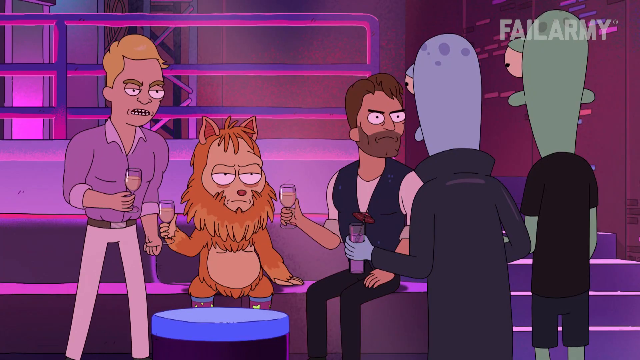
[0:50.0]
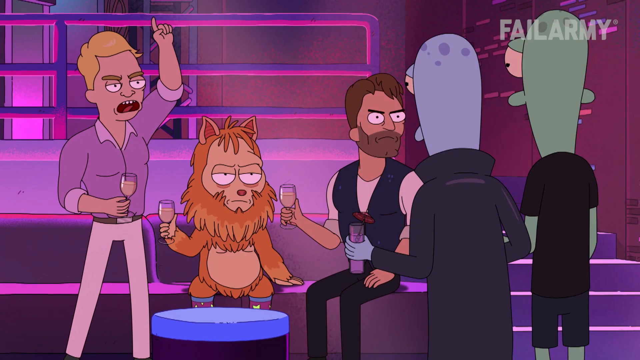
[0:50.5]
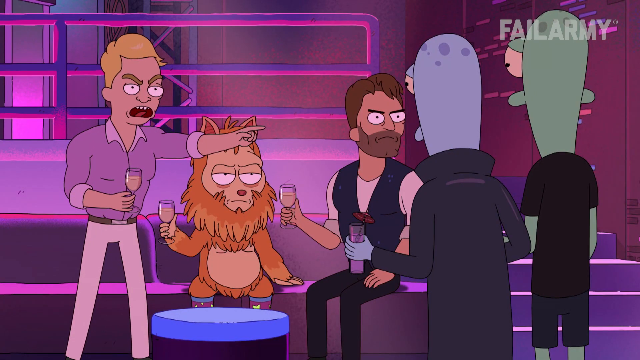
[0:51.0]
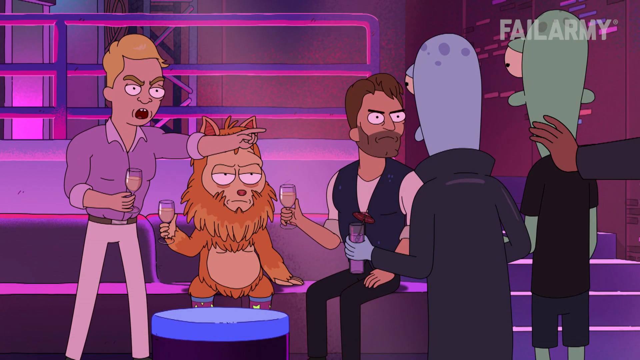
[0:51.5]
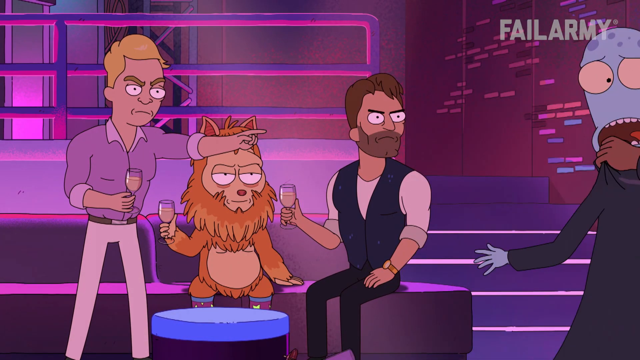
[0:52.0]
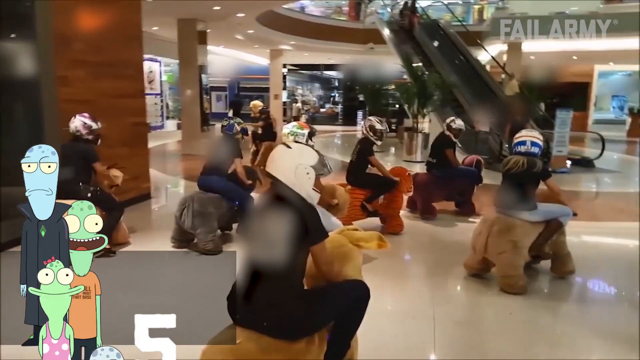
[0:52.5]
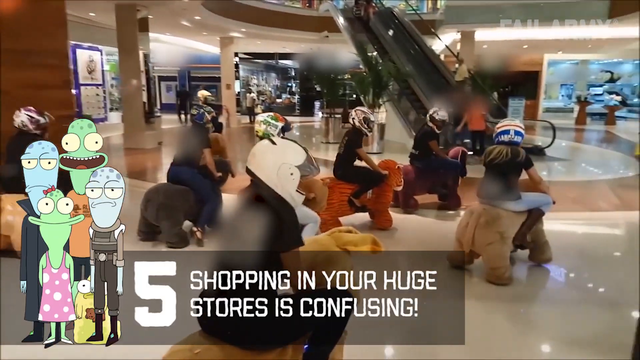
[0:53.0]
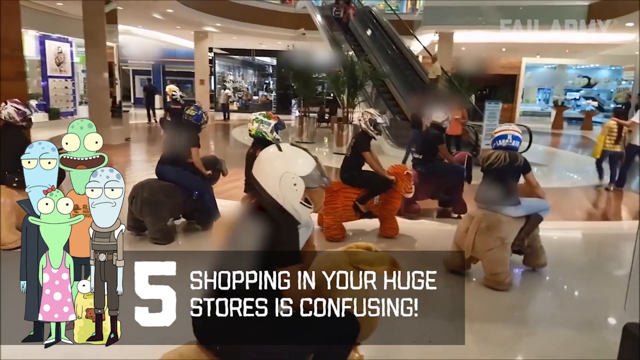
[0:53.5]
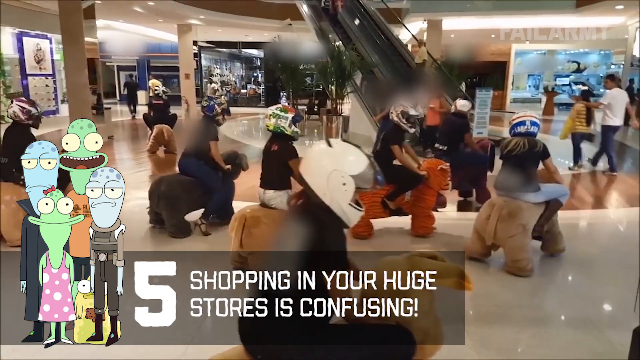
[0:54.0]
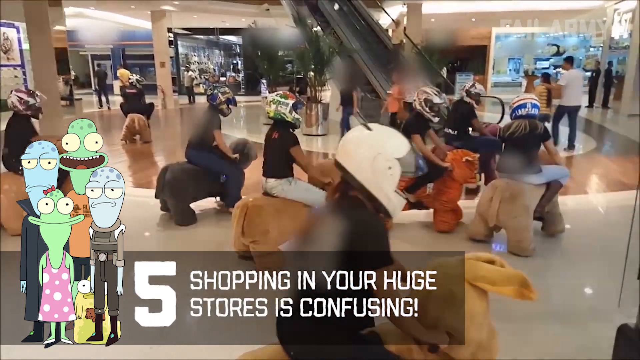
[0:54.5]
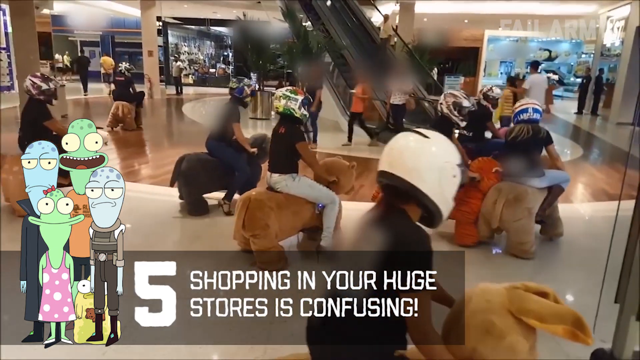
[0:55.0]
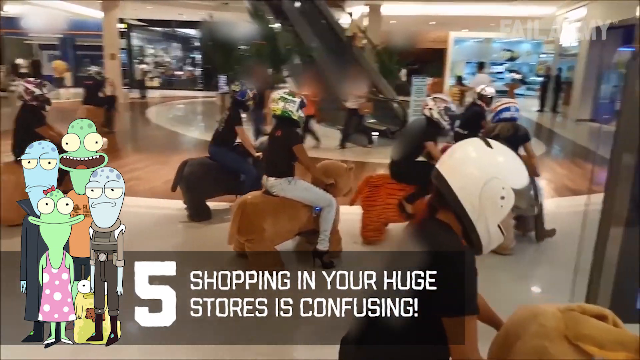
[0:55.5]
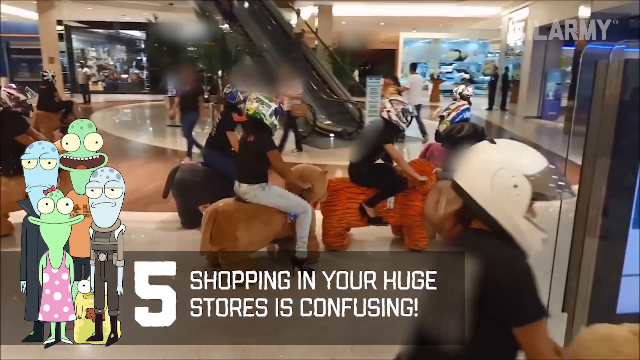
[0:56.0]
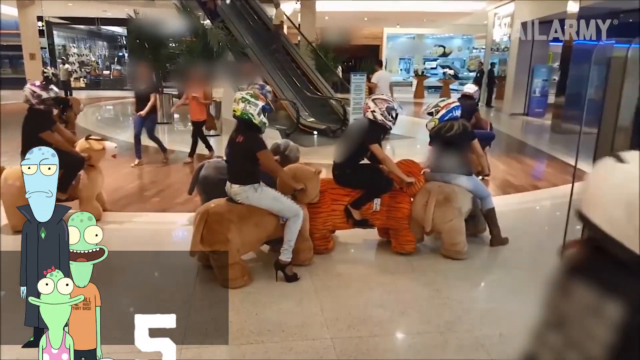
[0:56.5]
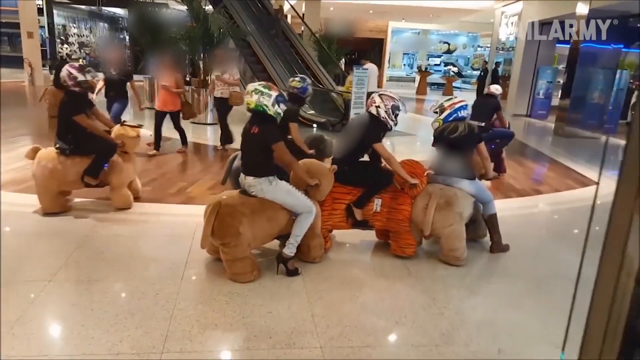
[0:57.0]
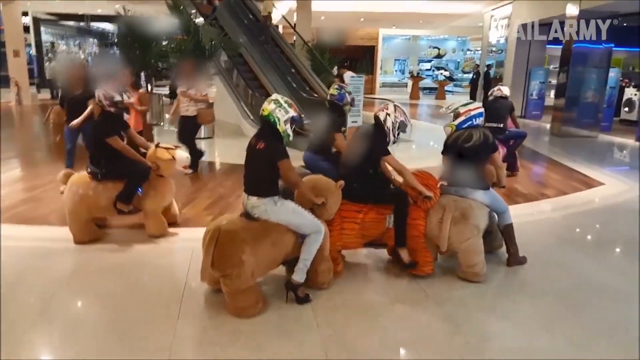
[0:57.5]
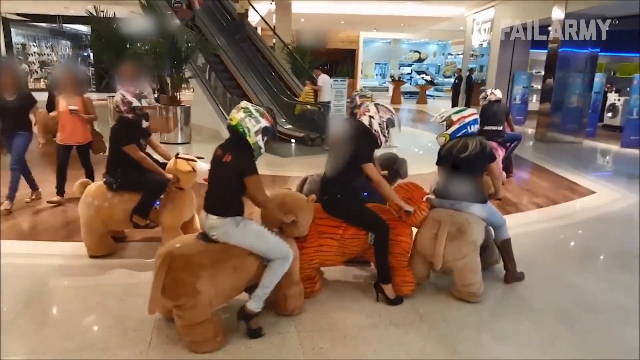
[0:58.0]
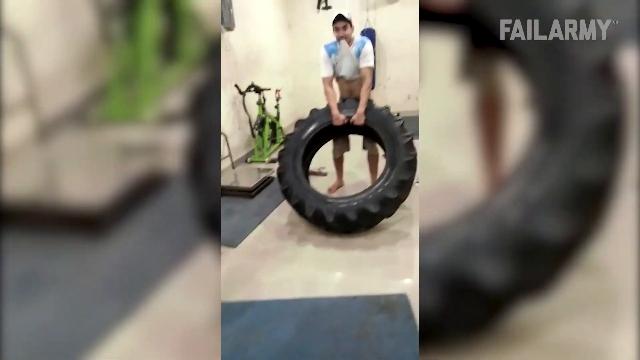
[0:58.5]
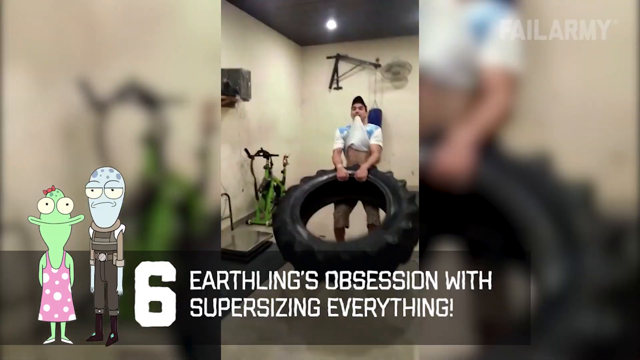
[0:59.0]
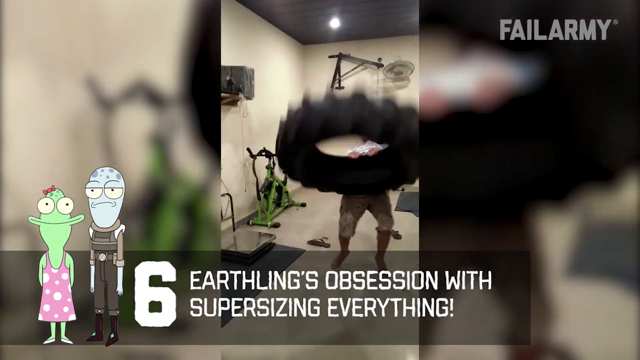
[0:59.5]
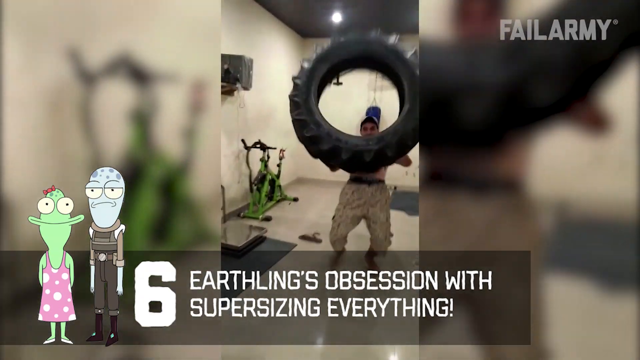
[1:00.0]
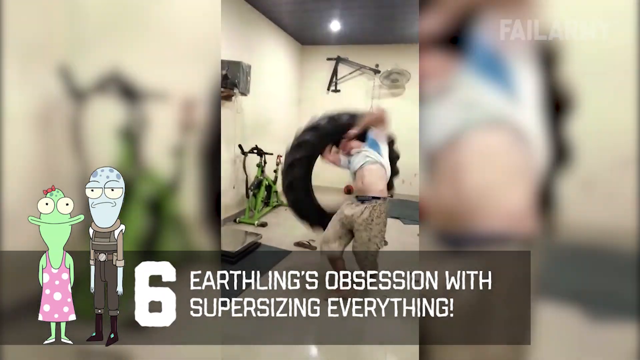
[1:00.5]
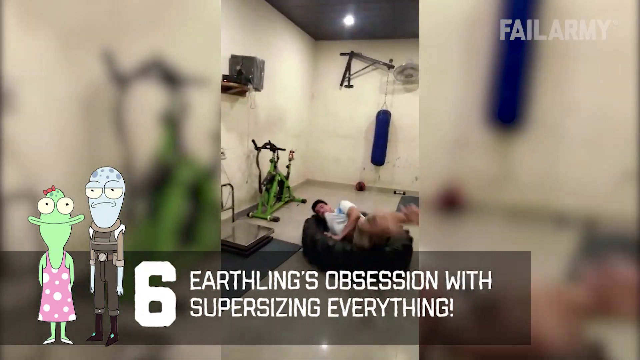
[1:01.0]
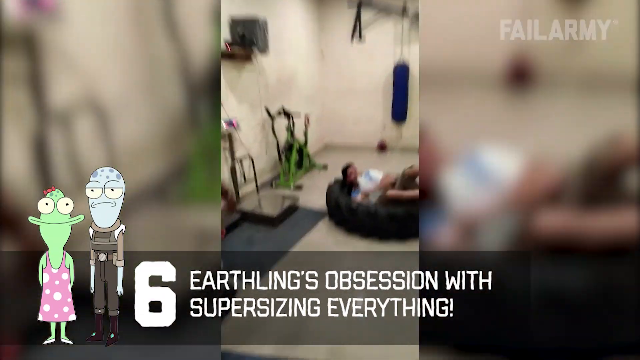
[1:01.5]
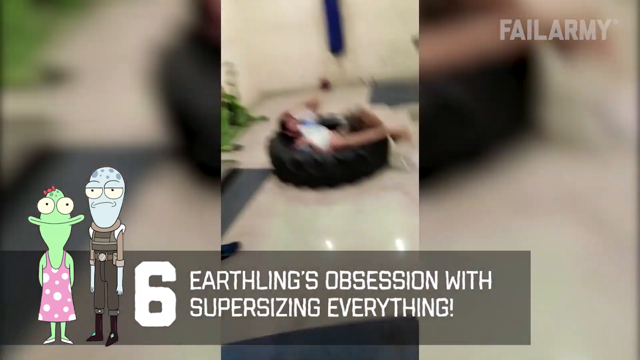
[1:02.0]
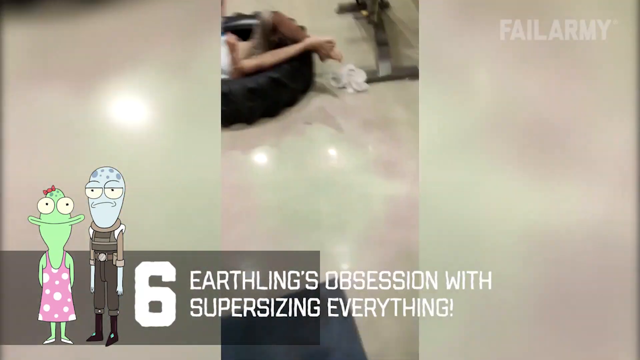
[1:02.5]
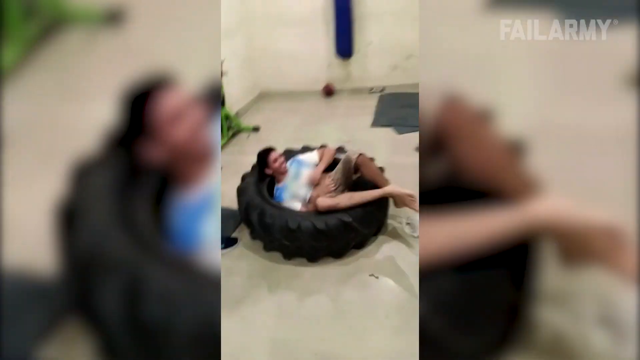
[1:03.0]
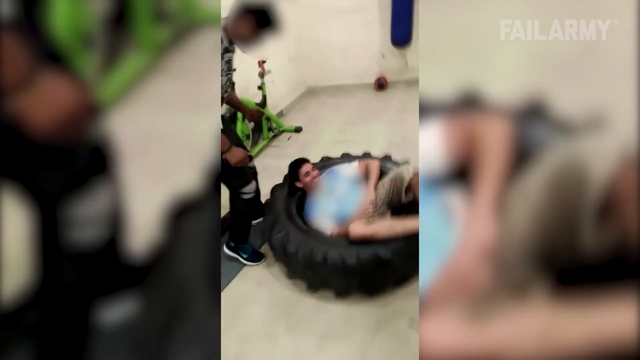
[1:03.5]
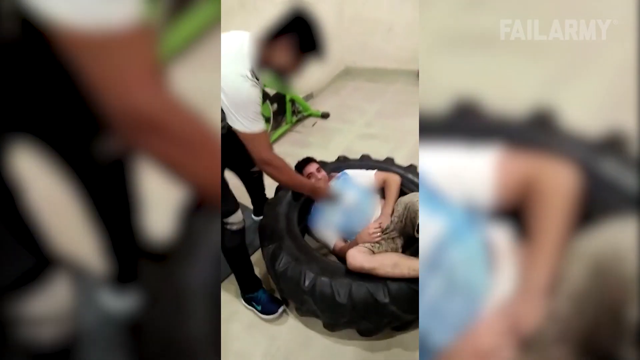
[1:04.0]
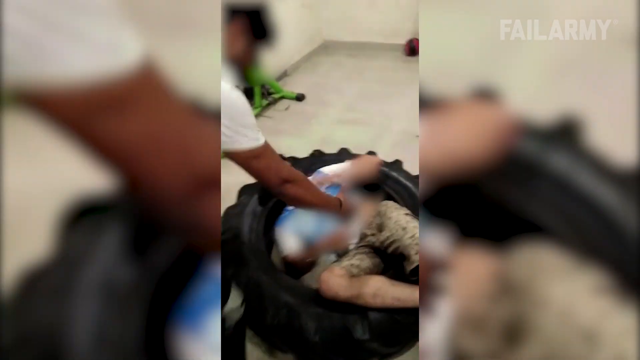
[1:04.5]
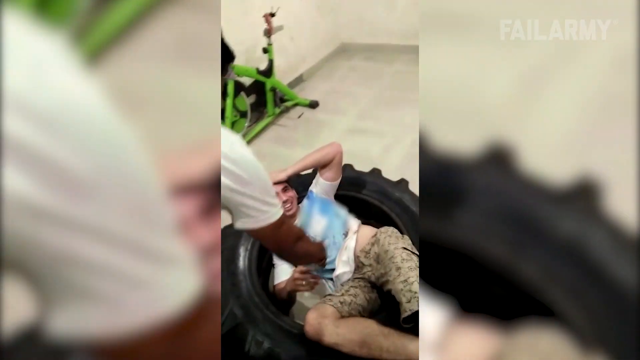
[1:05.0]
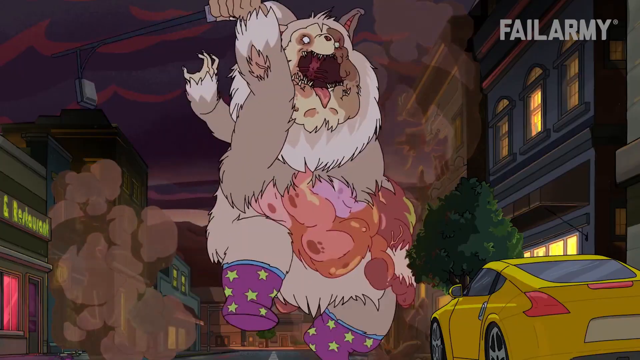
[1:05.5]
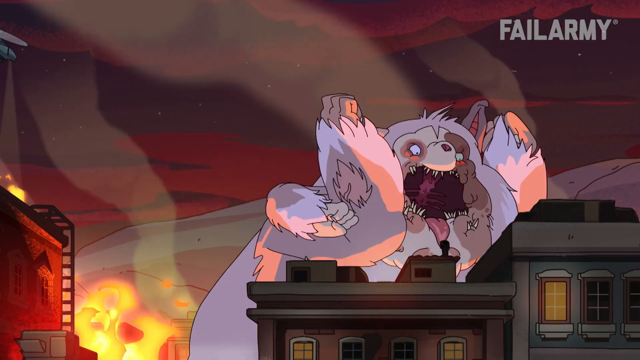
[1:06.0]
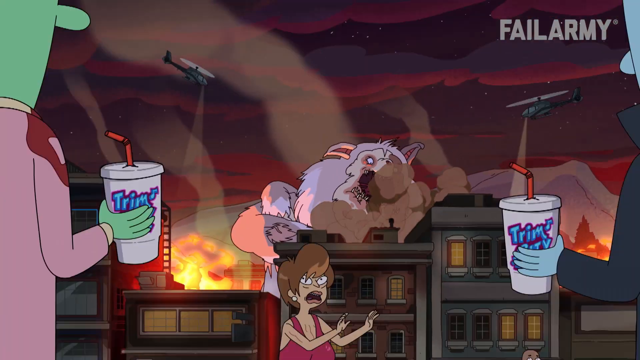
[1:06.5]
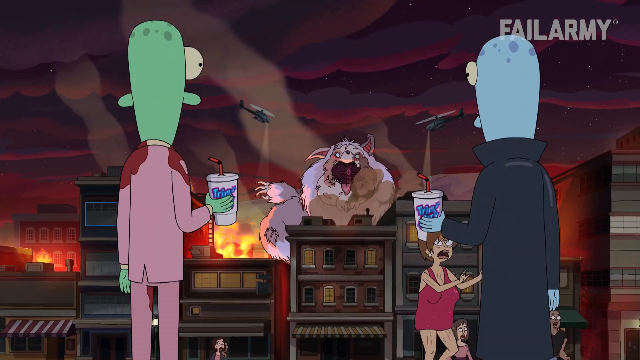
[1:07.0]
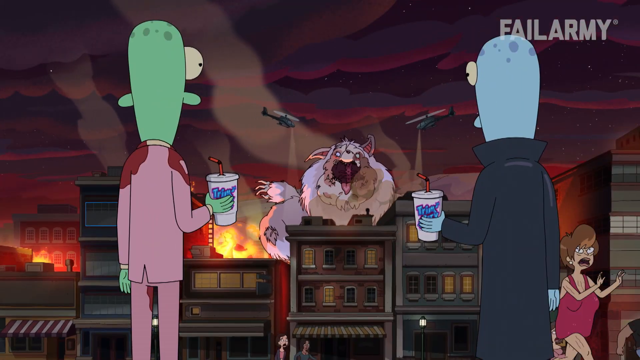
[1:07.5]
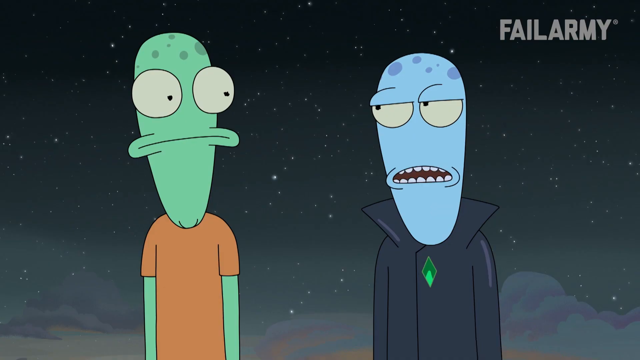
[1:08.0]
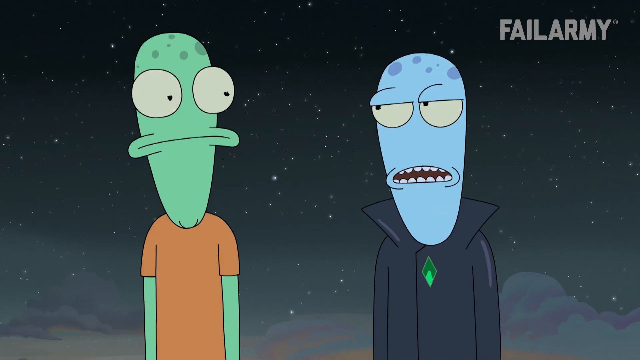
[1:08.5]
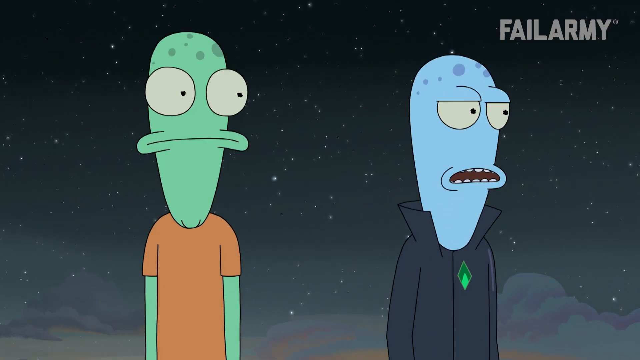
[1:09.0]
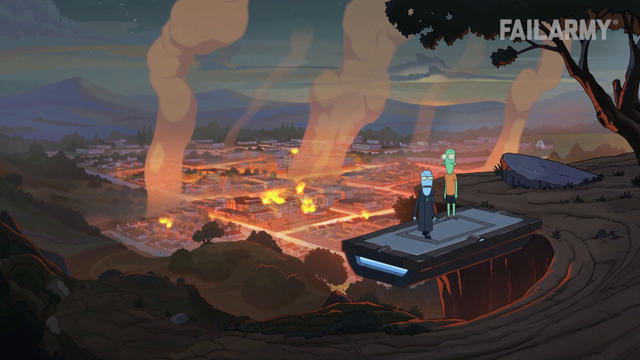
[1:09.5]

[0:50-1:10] The cartoon characters are at the talk show, and the scene transitions to what looks like a mall with an escalator. Text reads "Shopping in huge stores is confusing." In the mall, people with helmets on appear to be riding around near an escalator on toy mechanical animals. A guy with a big truck tire tries to pull it over his head, falls down, and the tire falls on top of him. Then an angry alien is beating on what looks like some kind of human city.